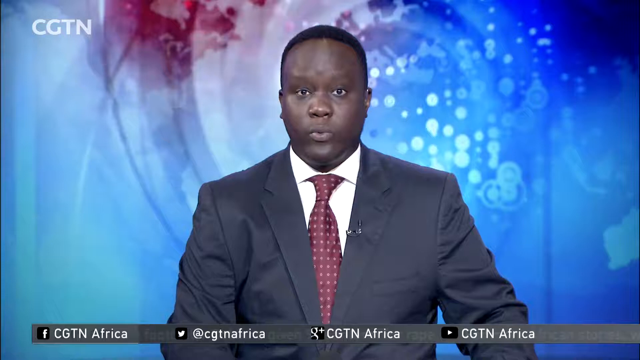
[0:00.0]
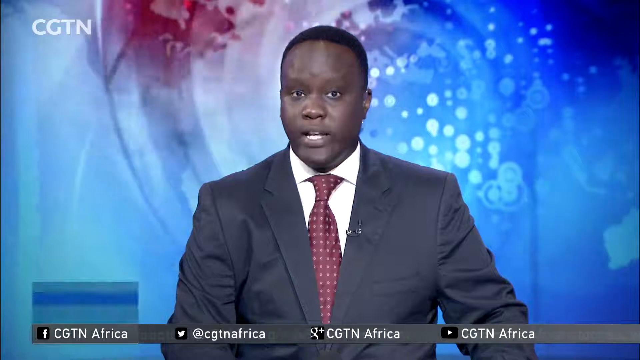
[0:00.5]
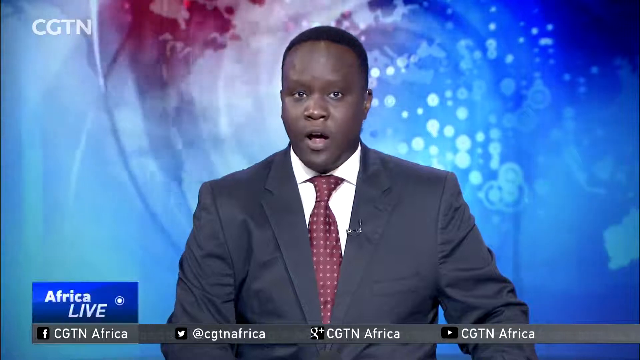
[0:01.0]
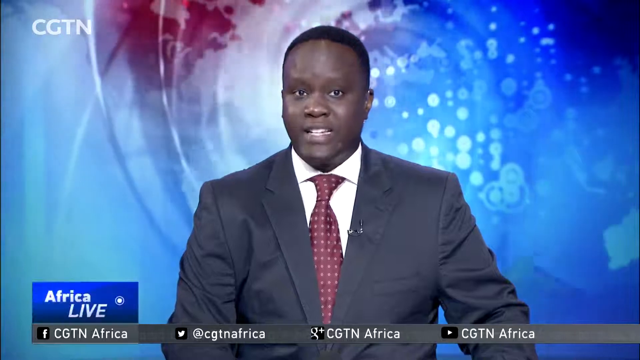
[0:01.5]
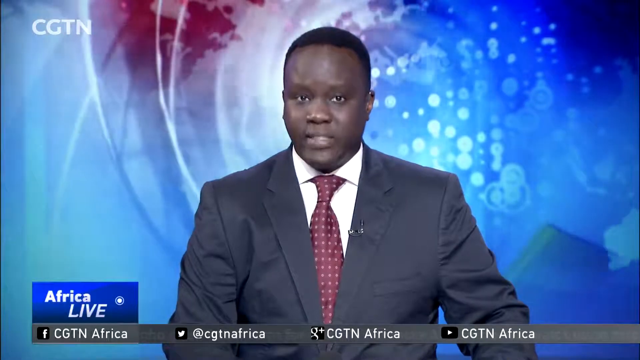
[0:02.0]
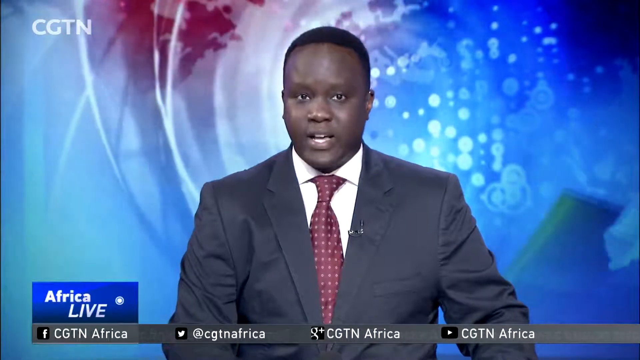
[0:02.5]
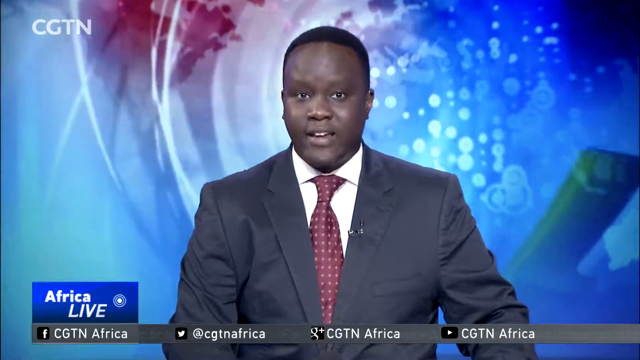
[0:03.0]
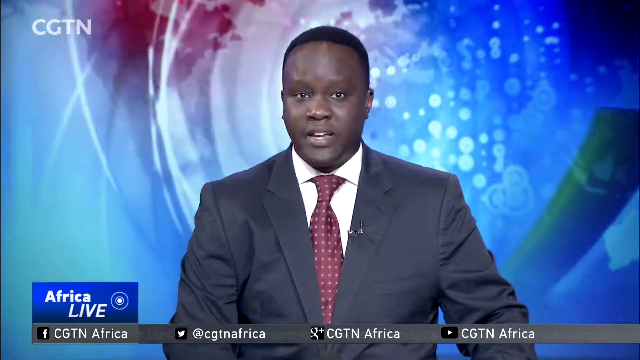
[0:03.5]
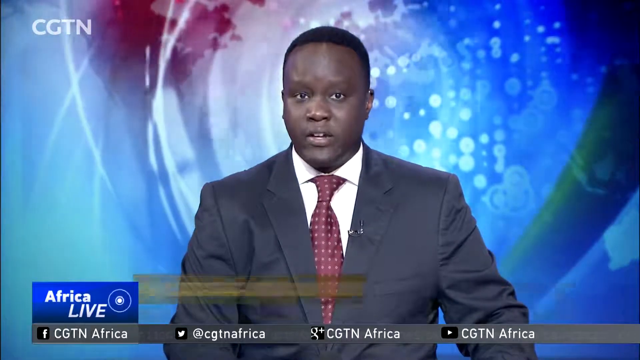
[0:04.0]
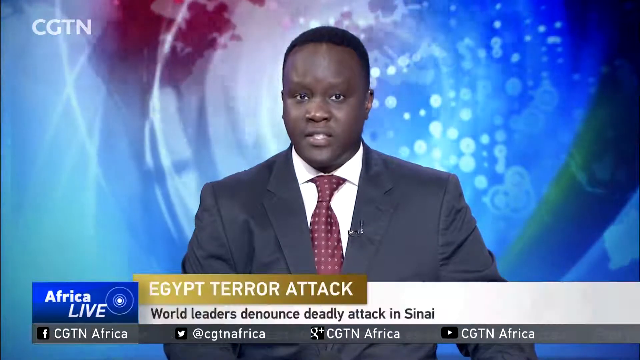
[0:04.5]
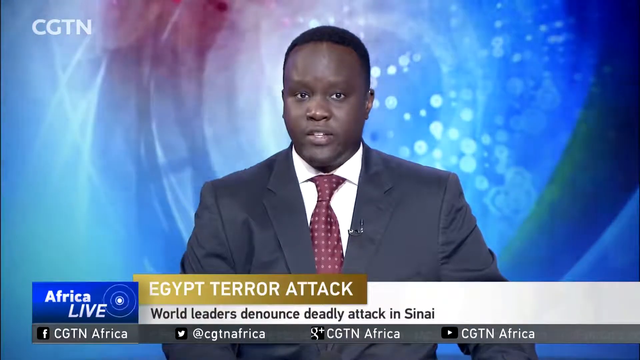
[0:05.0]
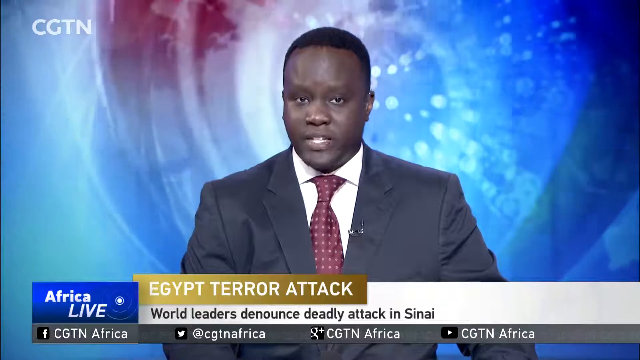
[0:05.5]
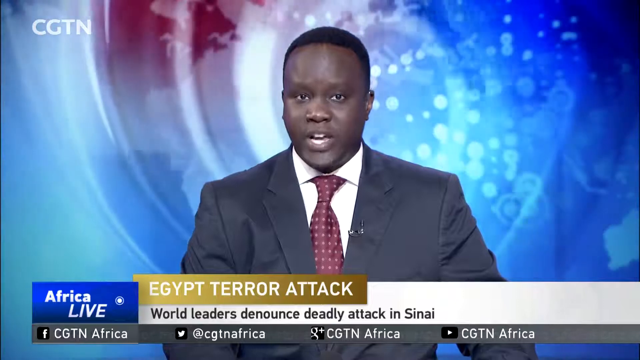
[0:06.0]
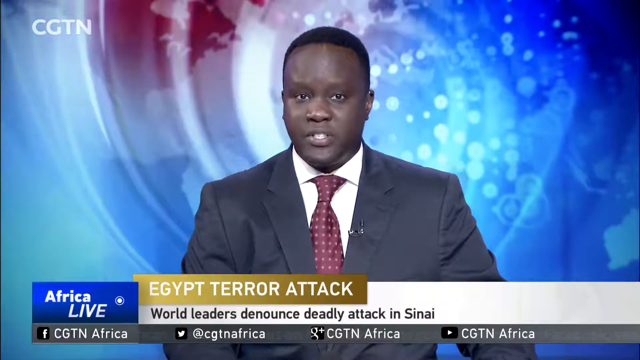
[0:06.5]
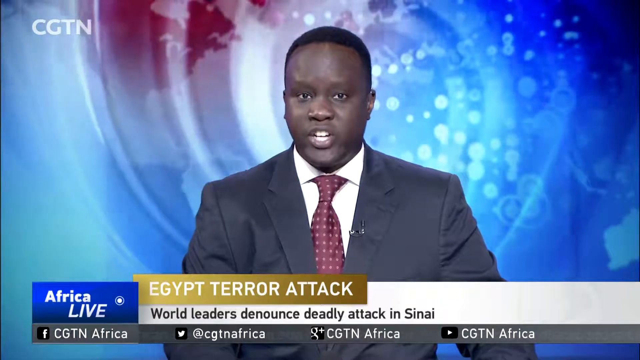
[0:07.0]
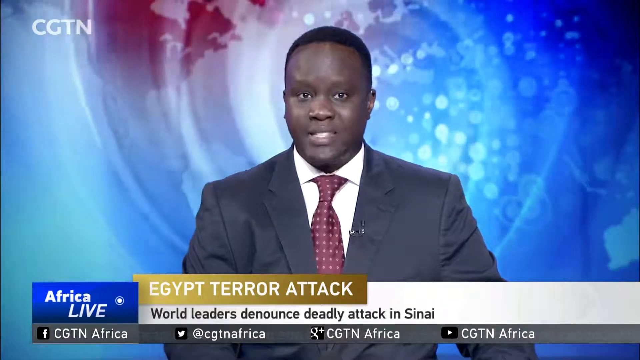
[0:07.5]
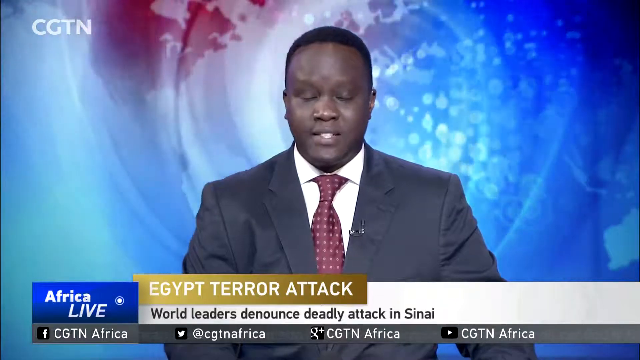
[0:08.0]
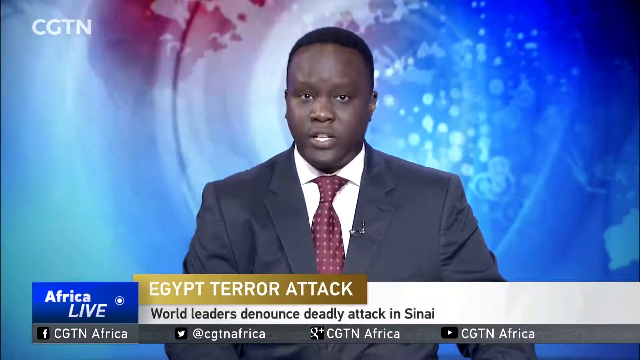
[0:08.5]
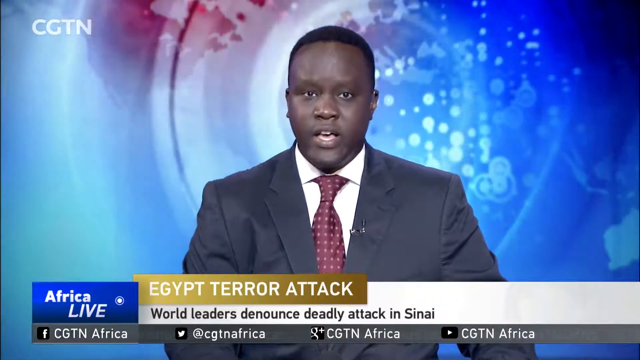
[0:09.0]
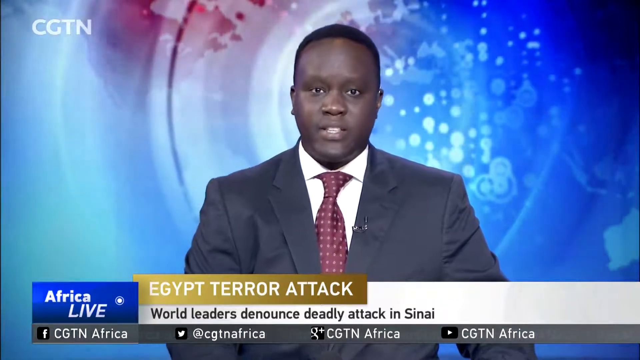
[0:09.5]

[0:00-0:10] A single news reader or anchor is visible on screen, a black man wearing a gray suit jacket, a red tie with white dots and a white shirt. Behind him is a predominantly blue animated background with circles of the globe going around, many white dots and other elements perhaps indicating radar. He keeps talking while the animation continues in the background. Text running along the bottom, above the CGTN Africa logo, reads "Egypt terror attack, world leaders denounce deadly attack in Sinai".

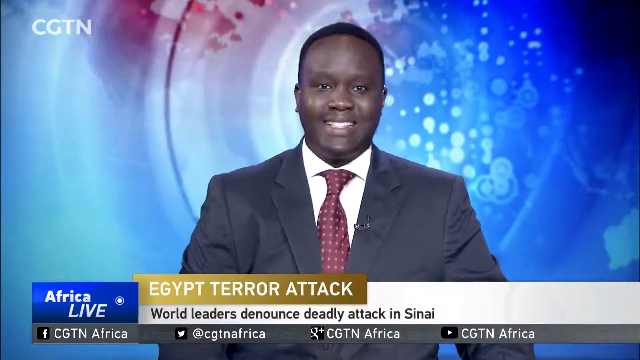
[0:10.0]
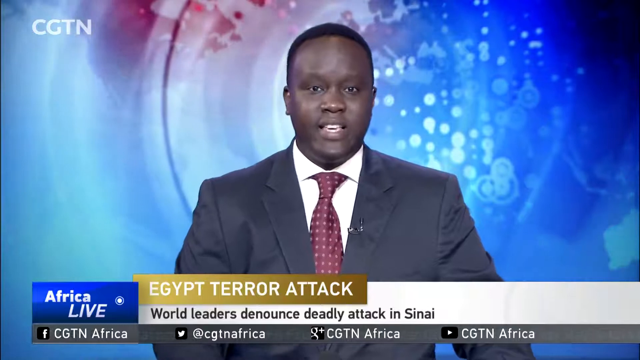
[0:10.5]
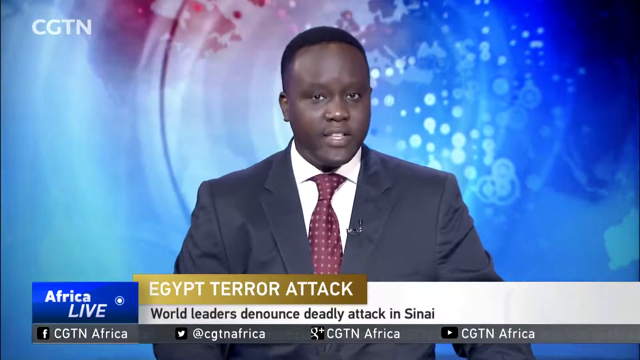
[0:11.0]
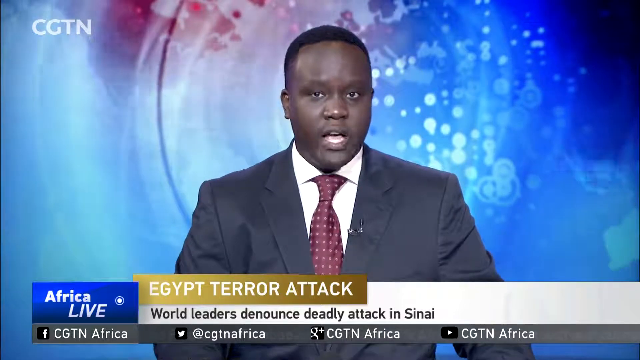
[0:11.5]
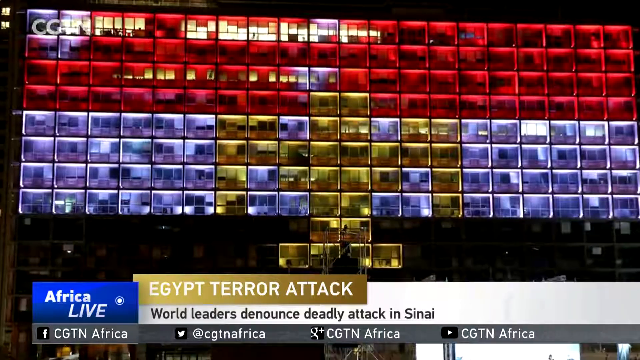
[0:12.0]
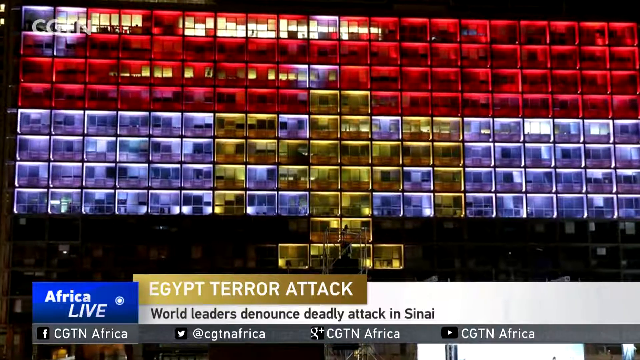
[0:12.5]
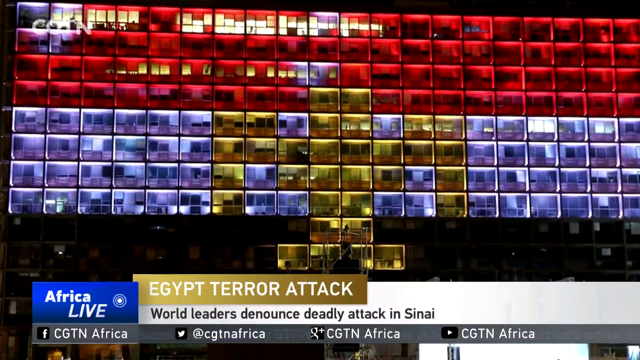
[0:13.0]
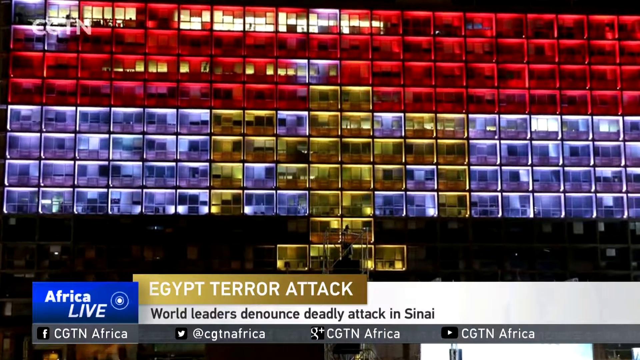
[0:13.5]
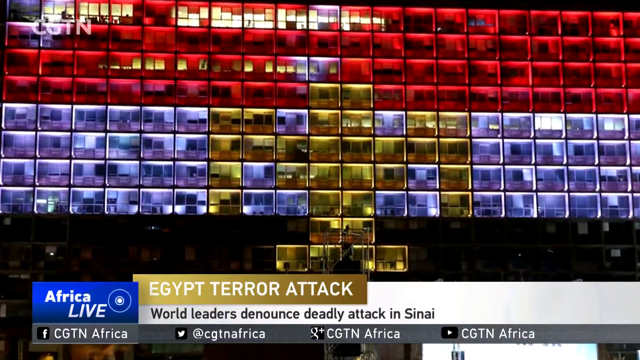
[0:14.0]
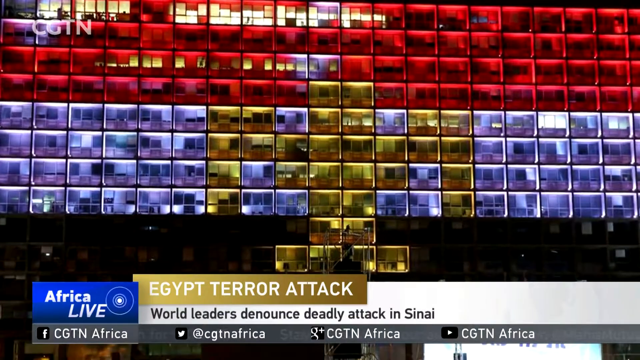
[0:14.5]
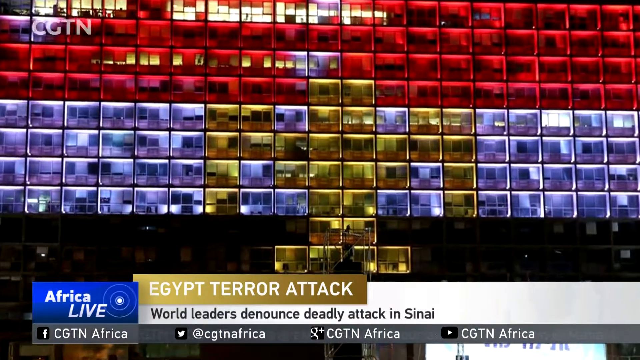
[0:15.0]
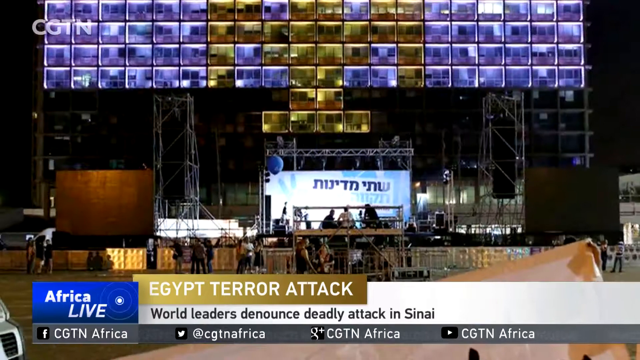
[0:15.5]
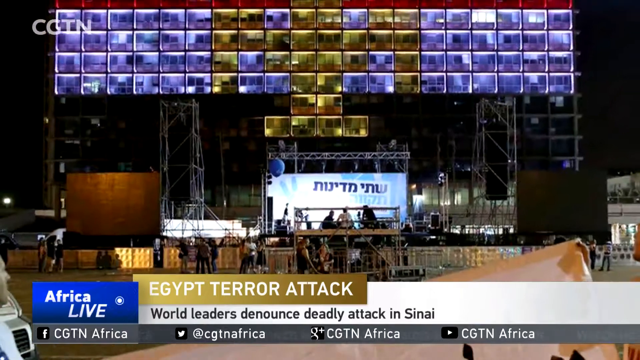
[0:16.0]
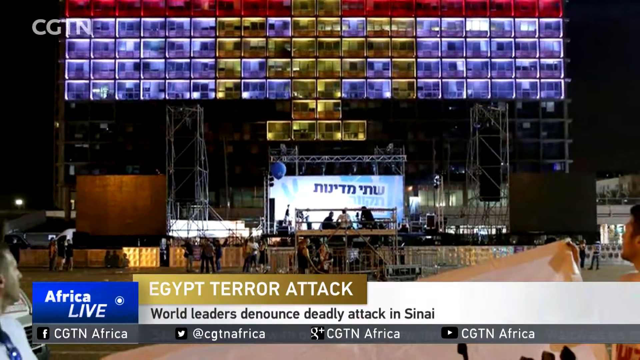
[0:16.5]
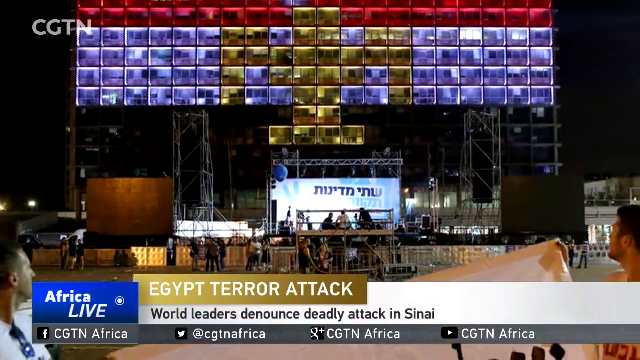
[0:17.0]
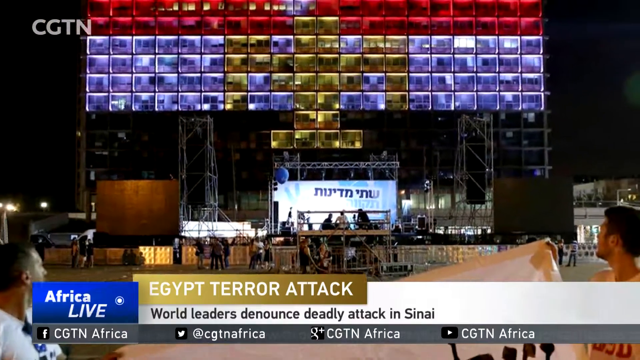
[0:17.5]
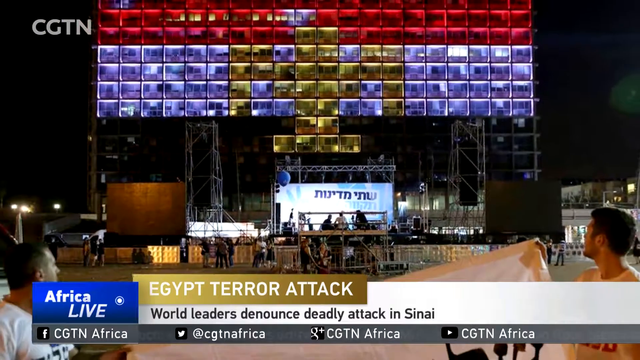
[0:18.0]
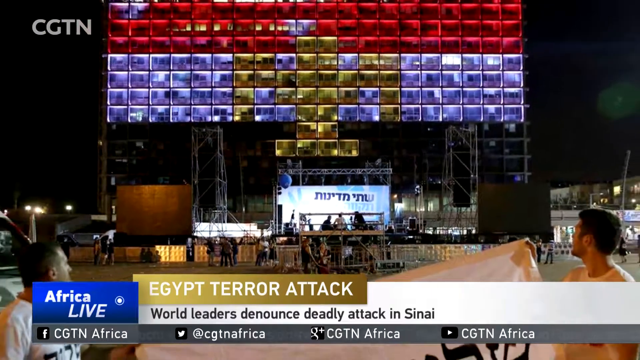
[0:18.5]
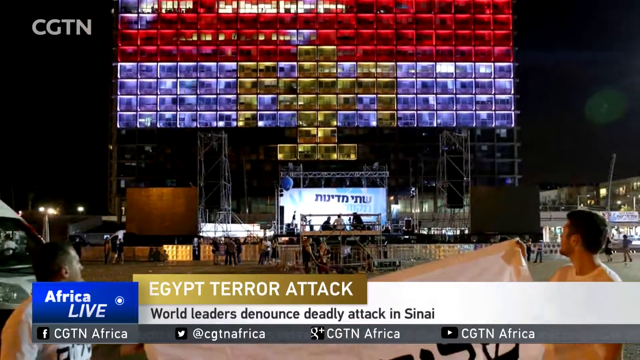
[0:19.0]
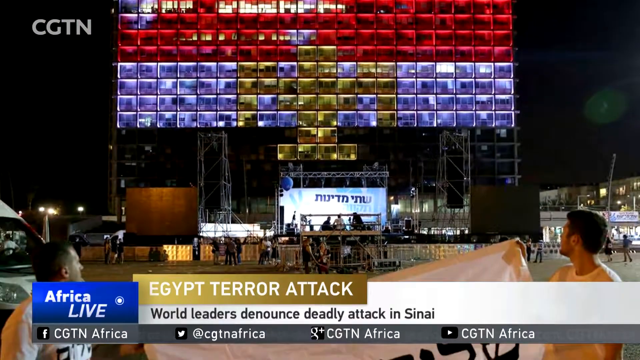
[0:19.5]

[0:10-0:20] The black man reading the news sits behind the same desk. The video then cuts to an image that appears to have been taken in Israel, apparently of a very large glass building lit up in yellow, white and red, with a lot of scaffolding in front of it. Some of the floors are dark and some are not, and groups of people are in the center of the image. The place is possibly where an event was or is due to take place. At the very end, a graphic responding to the terrorist attack appears: a white post with black lettering from Donald Trump condemning the attack.